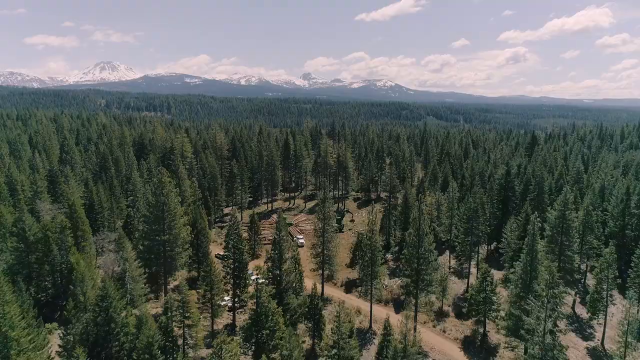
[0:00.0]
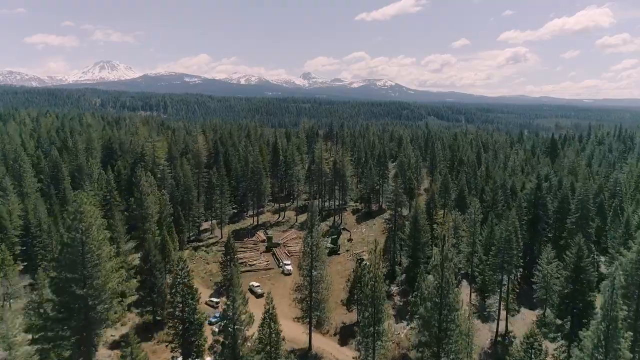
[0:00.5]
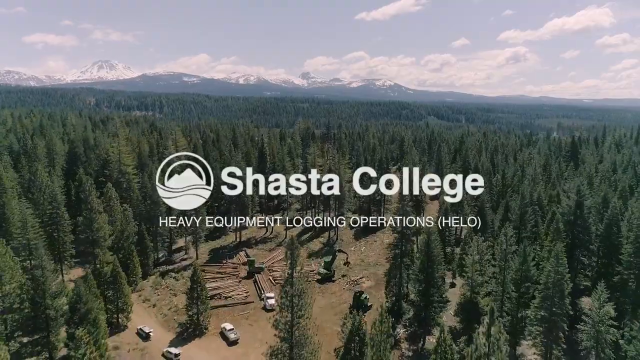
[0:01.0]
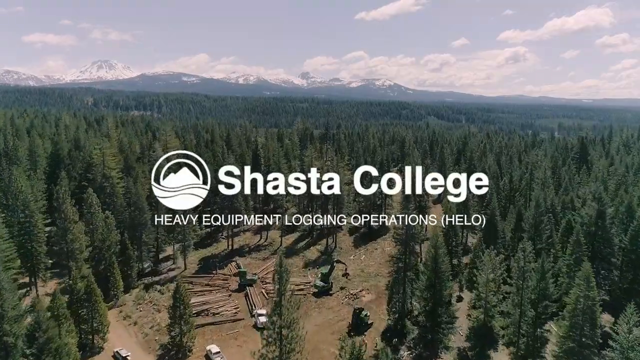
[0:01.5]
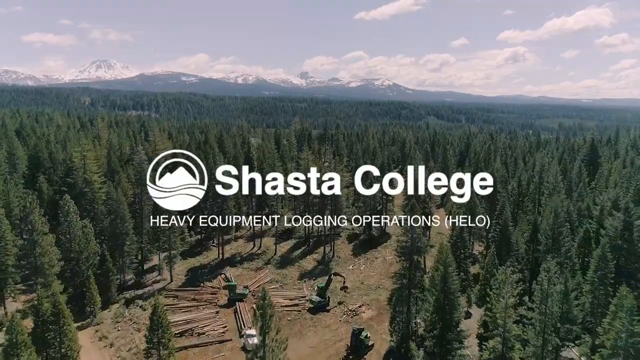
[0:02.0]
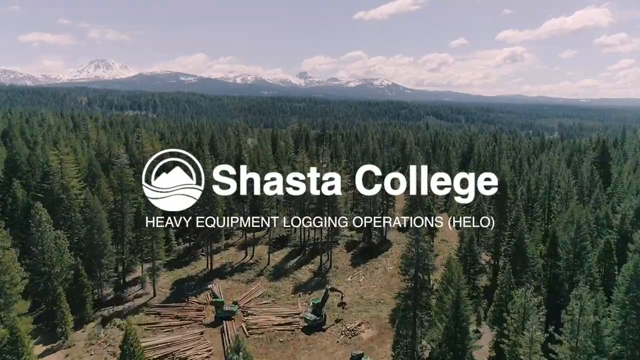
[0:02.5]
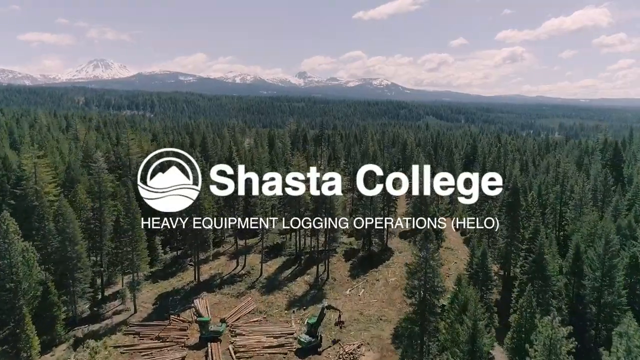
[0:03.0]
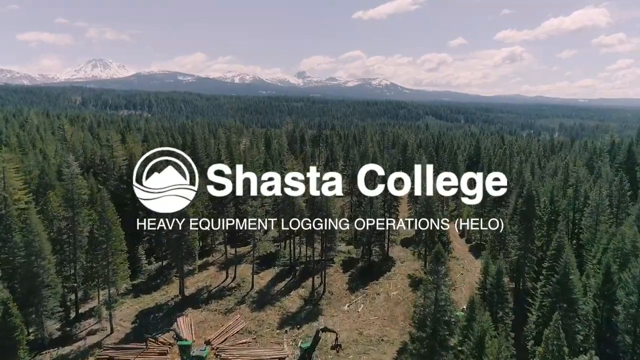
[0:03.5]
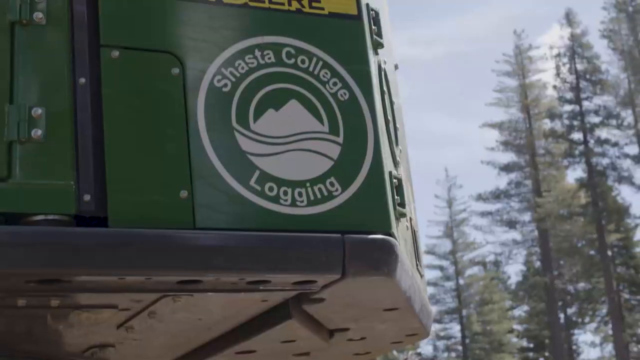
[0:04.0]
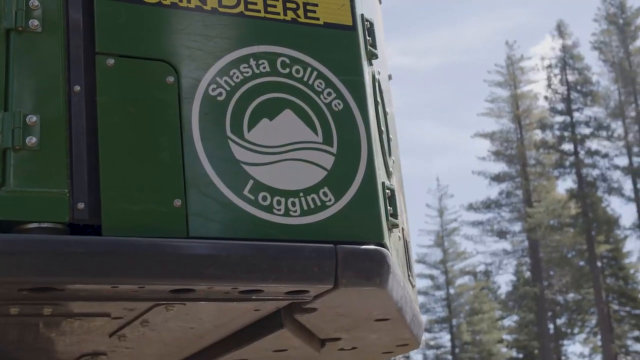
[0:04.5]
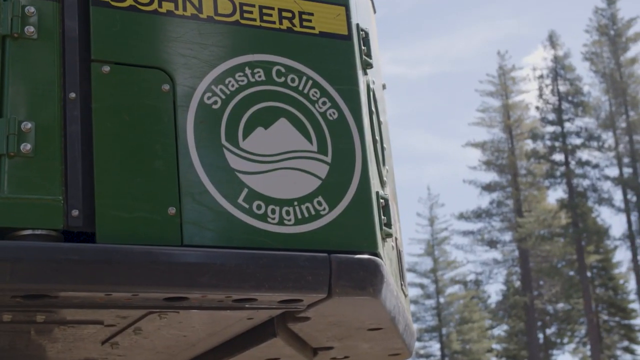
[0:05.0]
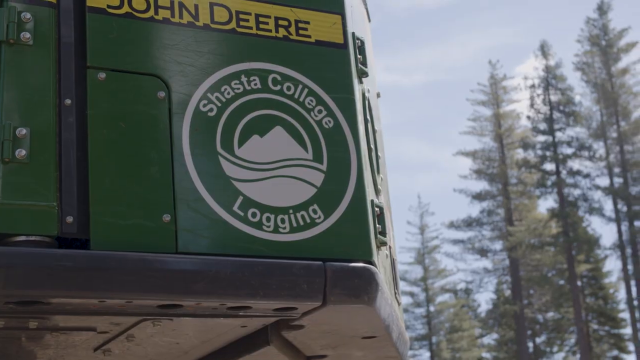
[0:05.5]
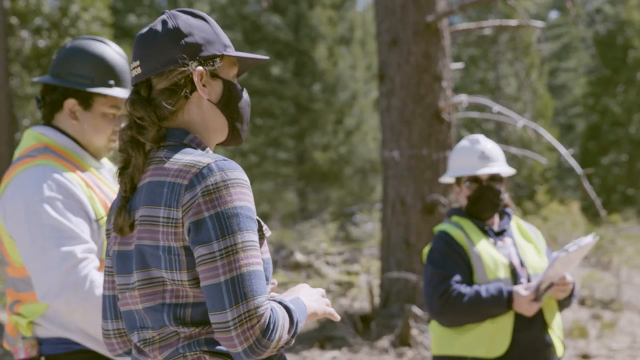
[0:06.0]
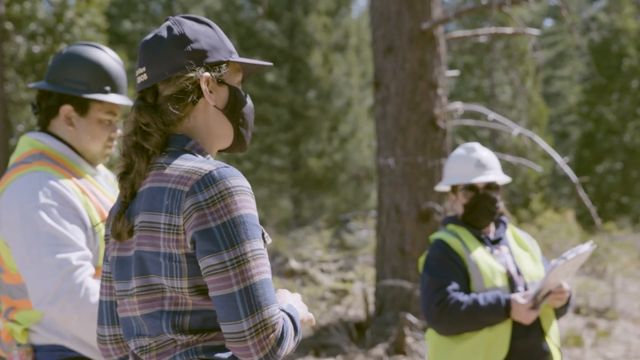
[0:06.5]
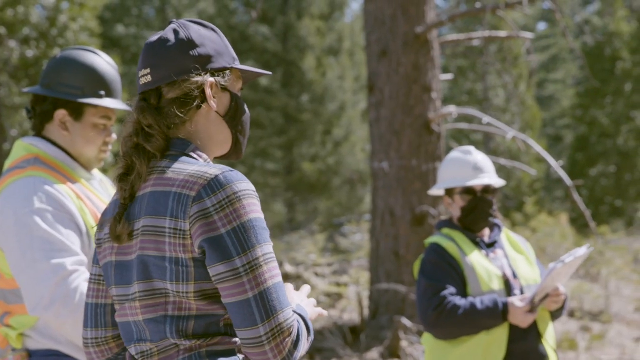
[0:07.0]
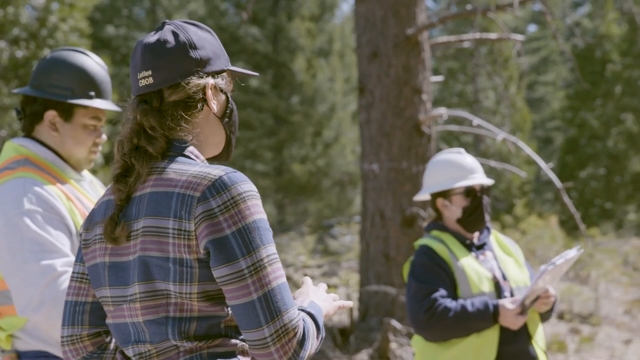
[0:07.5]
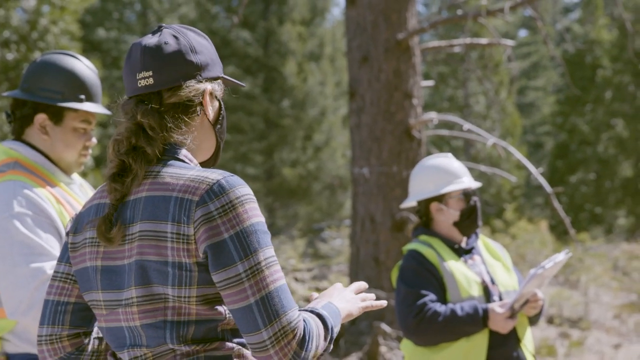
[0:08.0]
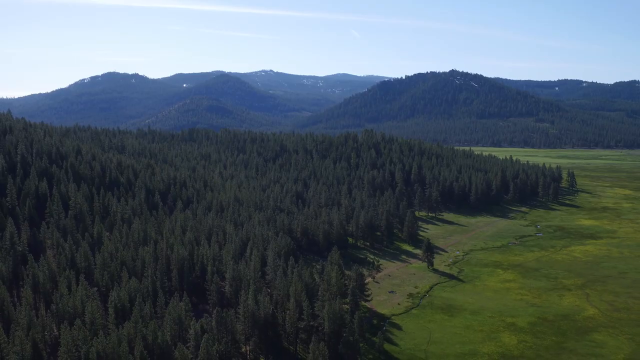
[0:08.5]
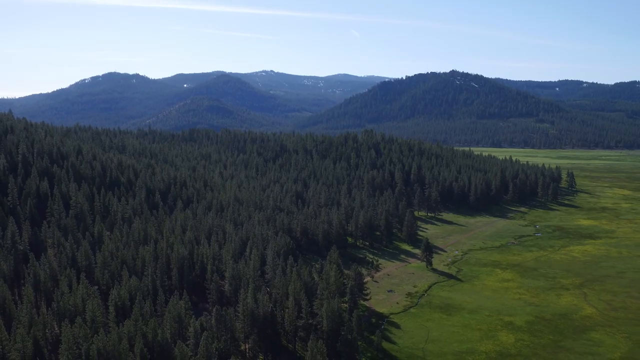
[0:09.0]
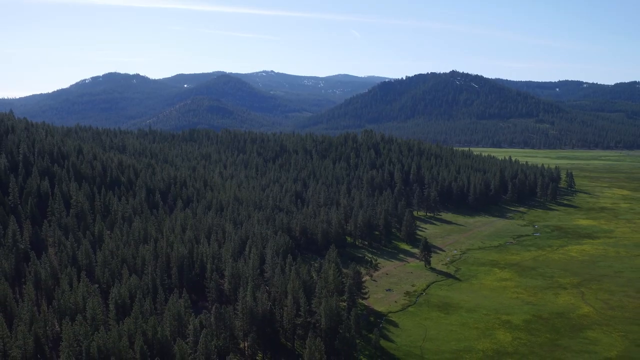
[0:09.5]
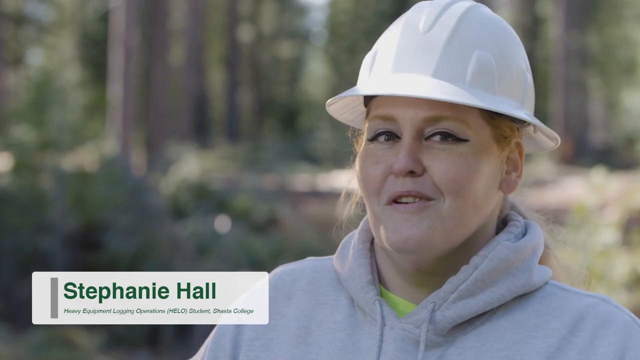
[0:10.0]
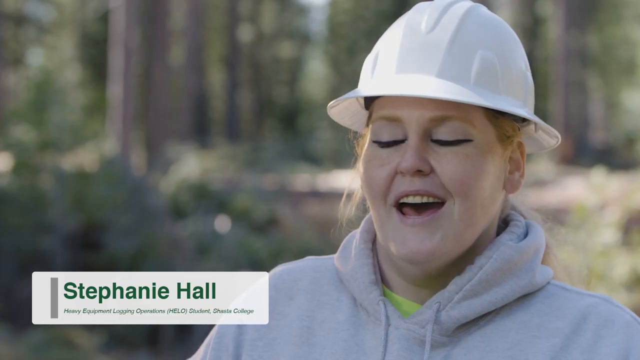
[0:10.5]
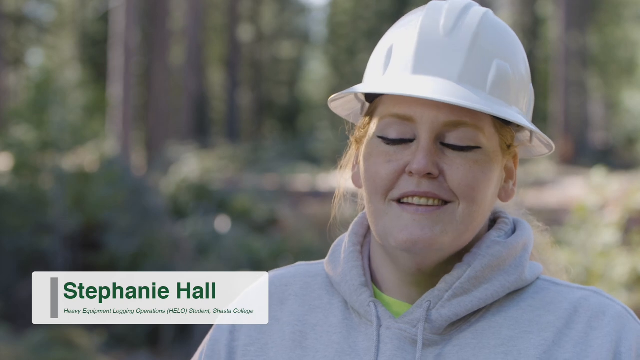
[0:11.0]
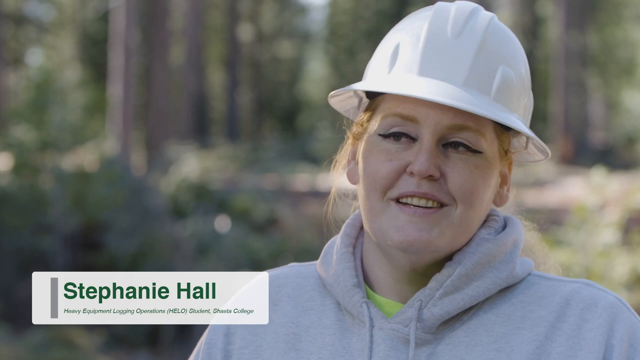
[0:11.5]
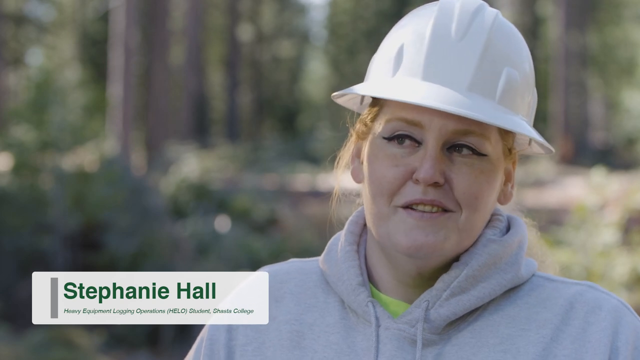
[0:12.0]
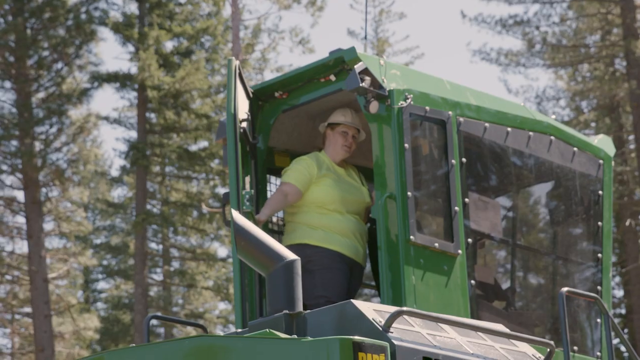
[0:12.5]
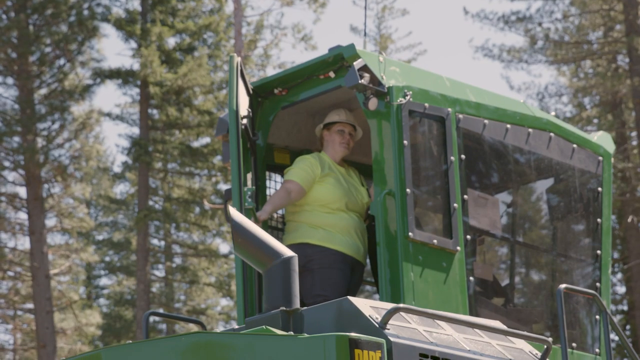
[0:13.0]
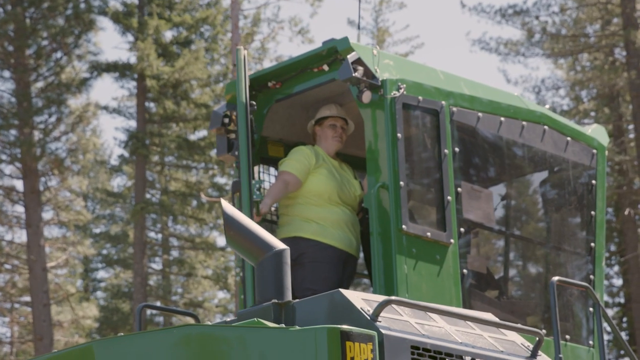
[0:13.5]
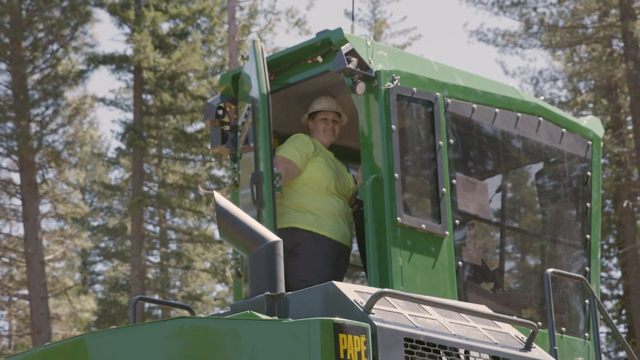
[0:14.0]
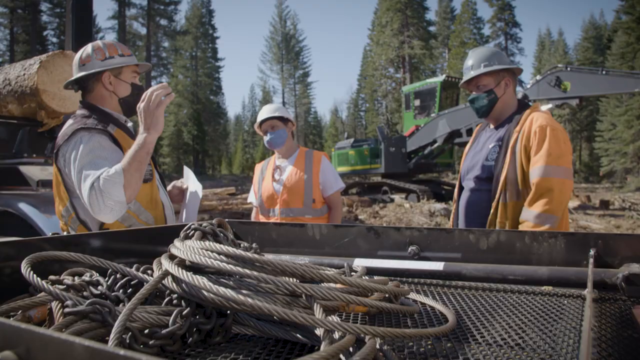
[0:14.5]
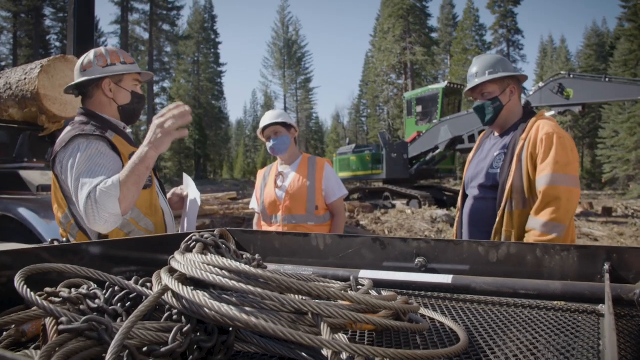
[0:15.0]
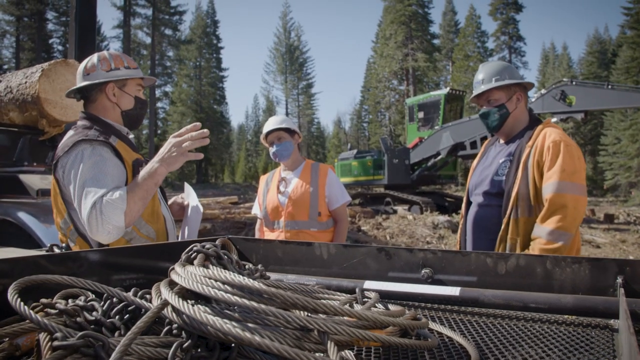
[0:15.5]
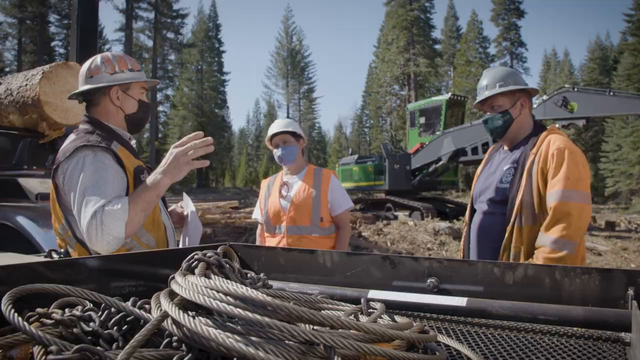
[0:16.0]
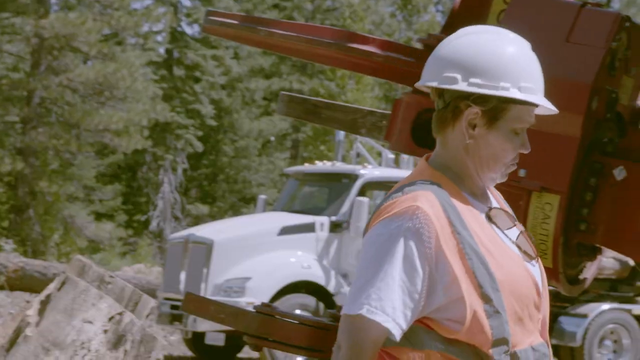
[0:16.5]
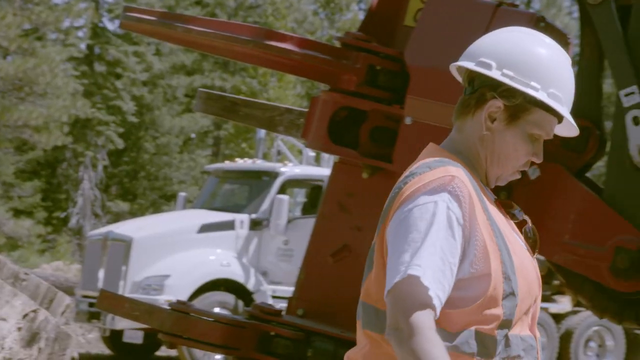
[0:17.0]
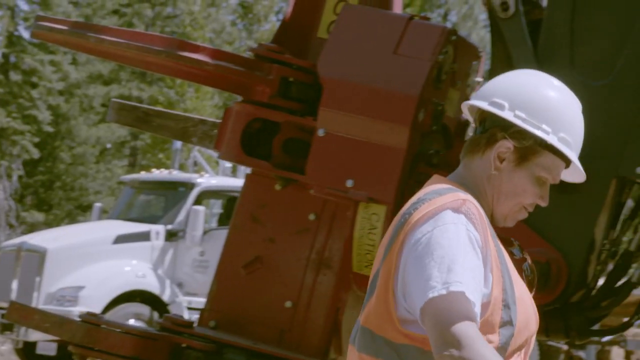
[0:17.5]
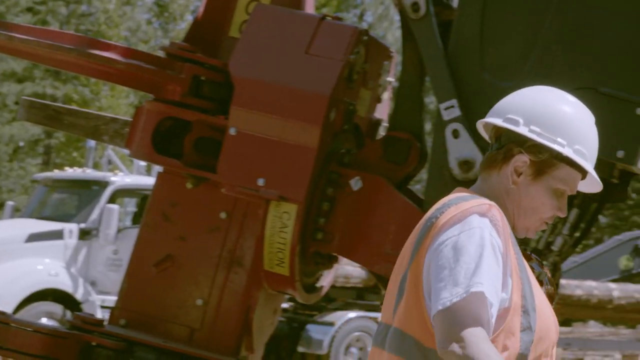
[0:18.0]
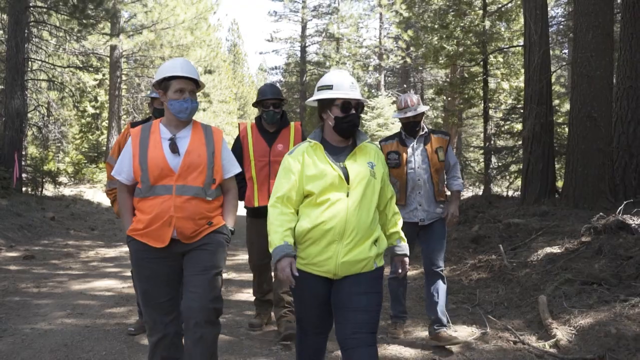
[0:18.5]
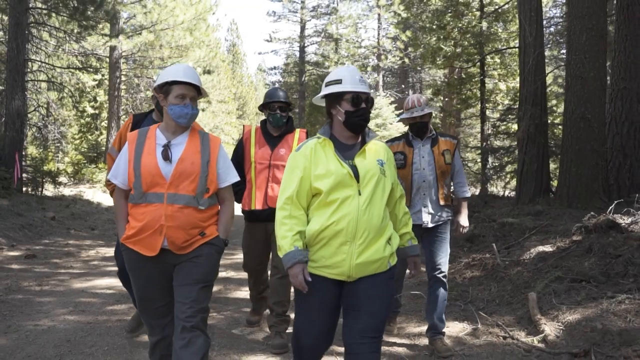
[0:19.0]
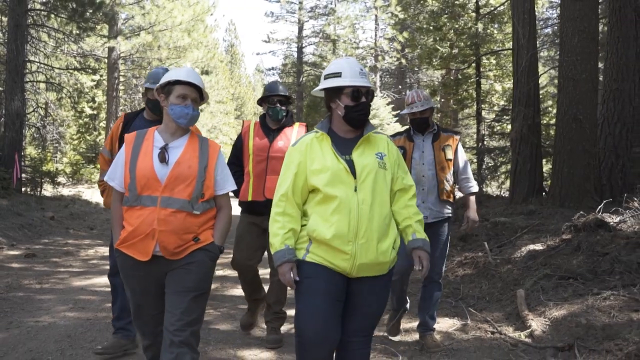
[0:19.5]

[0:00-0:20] An aerial view shows a lush green forest with mountains with white peaks at the top on a slightly cloudy day. A college logo appears: "Shasta College Heavy Equipment Lodging Operations." Next comes a John Deere machine with the Shasta College Lodging logo stamped on it. The video then cuts to three people, all wearing caps of some sort, two of them in black masks, speaking about something. One lady holds a clipboard, and two of them wear caution shirts. The lady with the clipboard looks away, holding the clipboard, in a solo interview in the forest. Her name is Stephanie Hall; she wears a white hoodie, has orange hair, orange eyebrows and fairly heavy eyeliner, is slightly overweight, and is talking. She is then shown stepping into one of the machines and shutting the door. The scene cuts to three workers, all wearing caution vests, hard hats and some sort of face mask, all speaking. They are in an area that looks like trees have just been chopped down, having a conversation about what they plan to do.